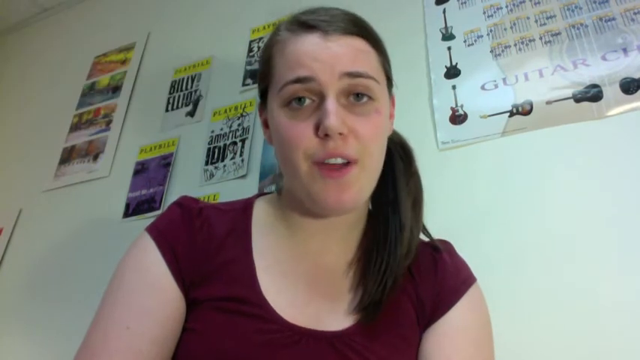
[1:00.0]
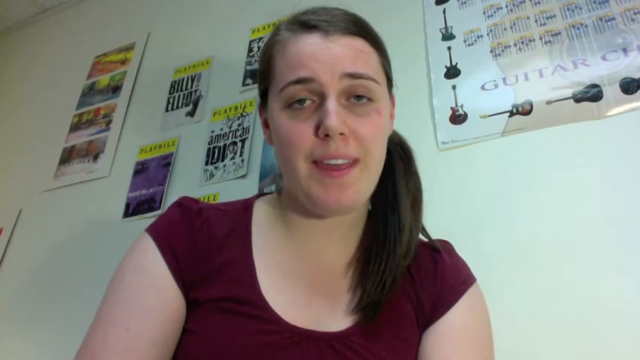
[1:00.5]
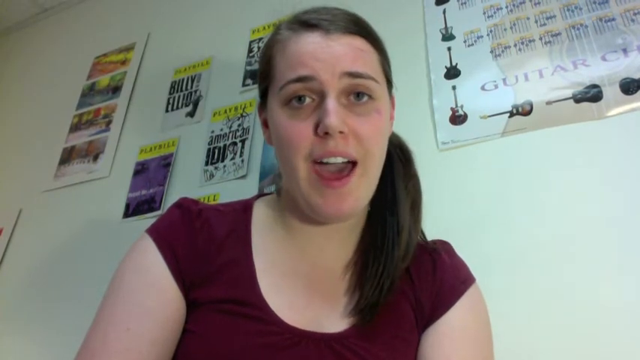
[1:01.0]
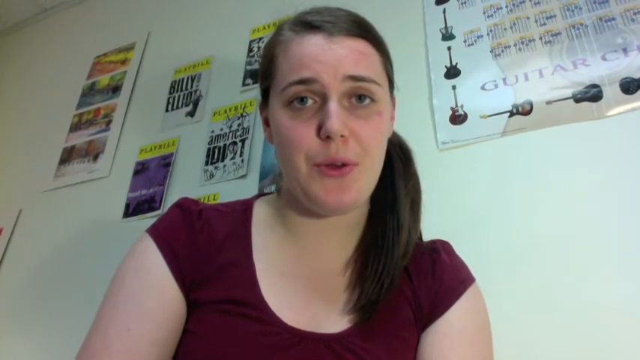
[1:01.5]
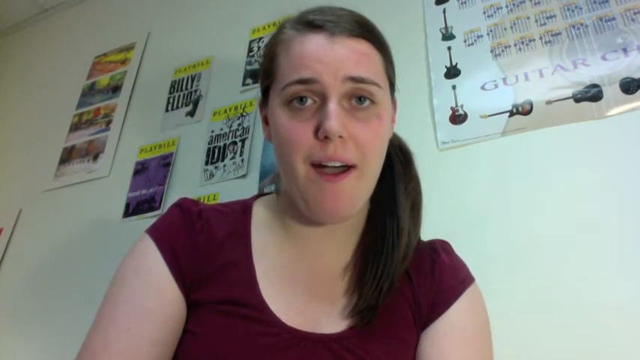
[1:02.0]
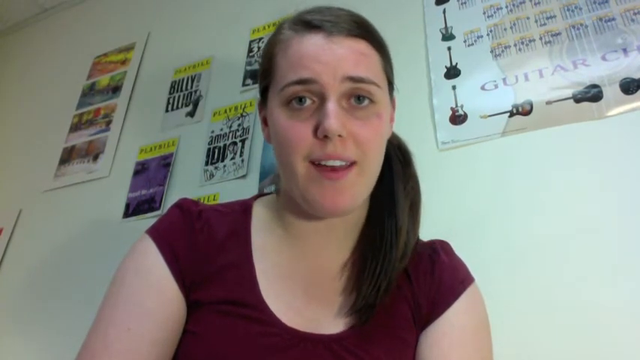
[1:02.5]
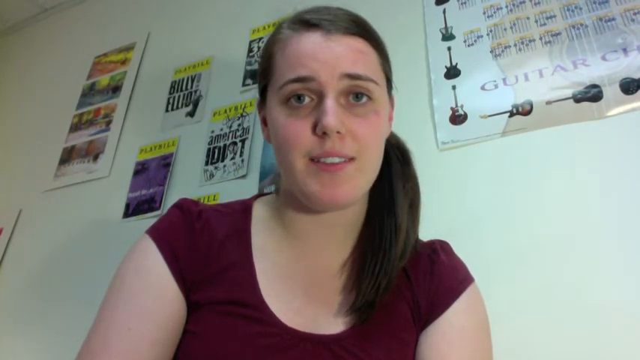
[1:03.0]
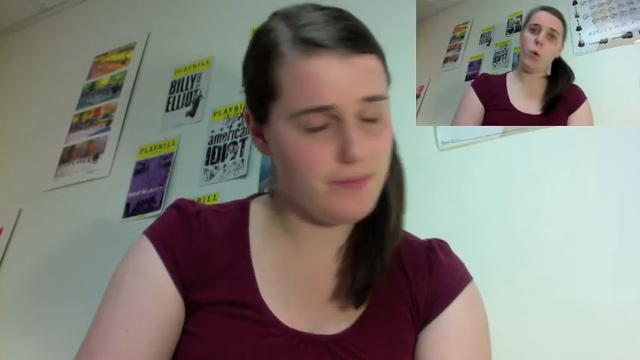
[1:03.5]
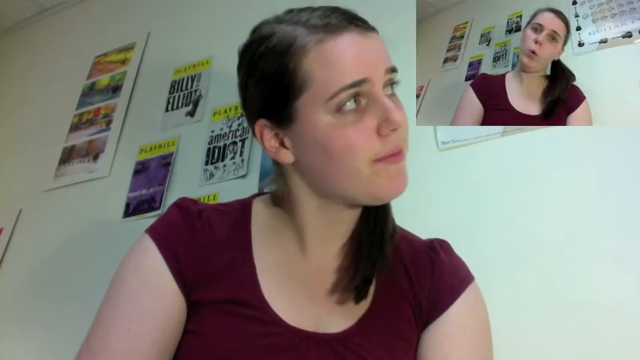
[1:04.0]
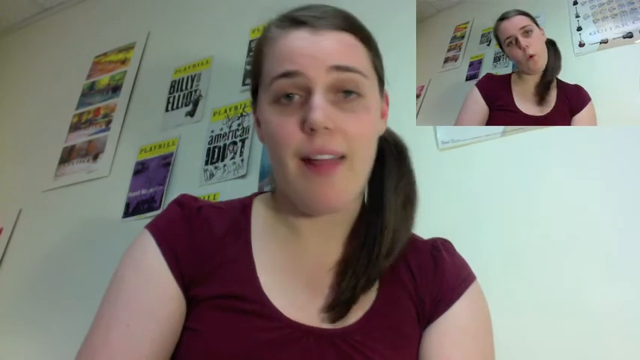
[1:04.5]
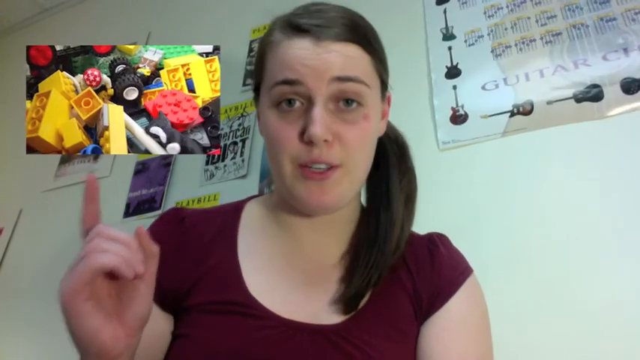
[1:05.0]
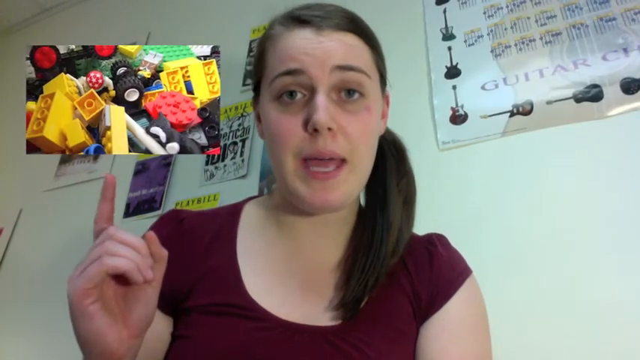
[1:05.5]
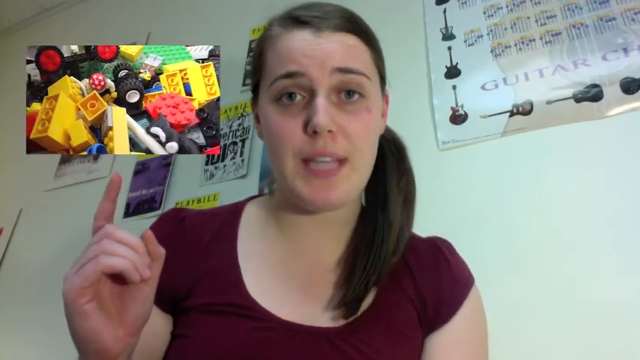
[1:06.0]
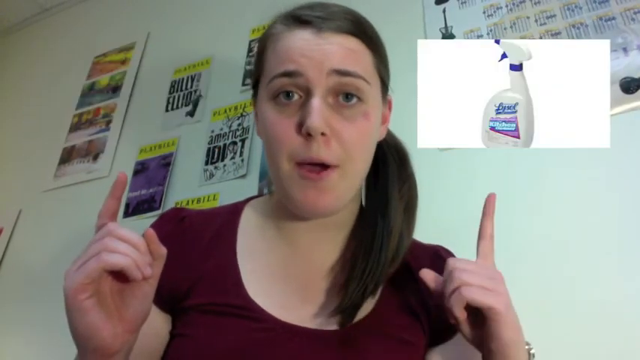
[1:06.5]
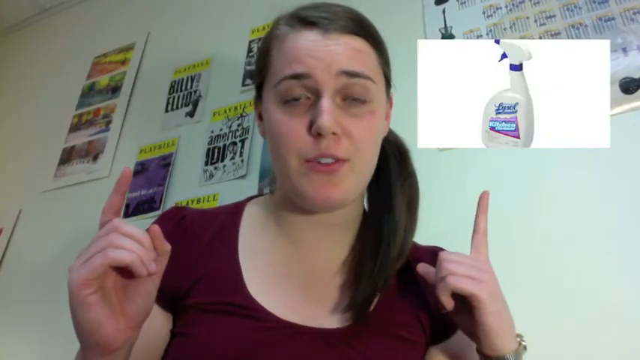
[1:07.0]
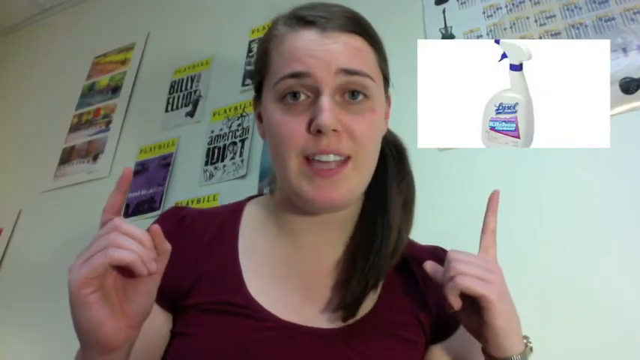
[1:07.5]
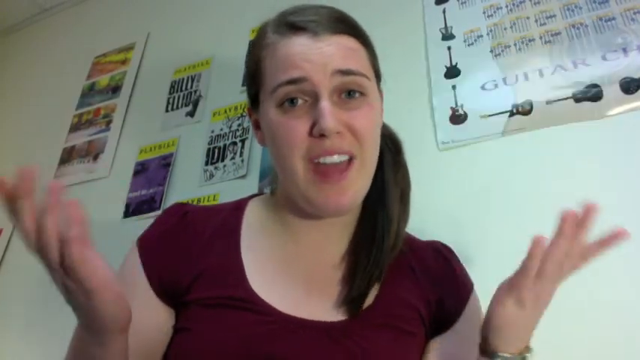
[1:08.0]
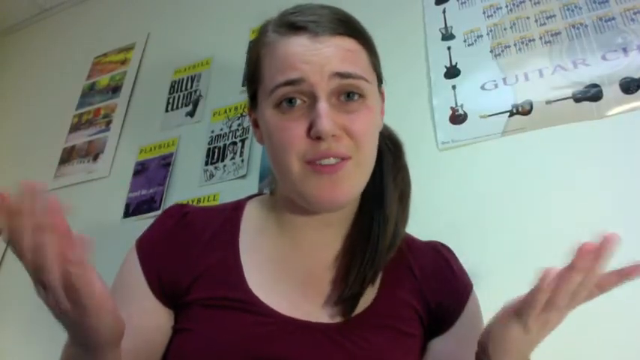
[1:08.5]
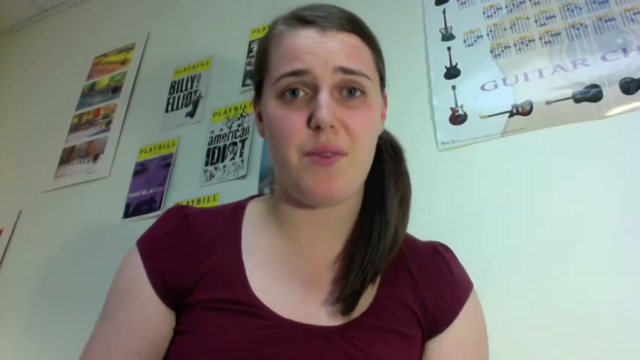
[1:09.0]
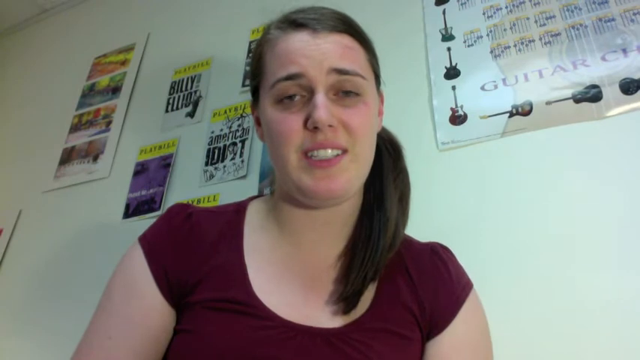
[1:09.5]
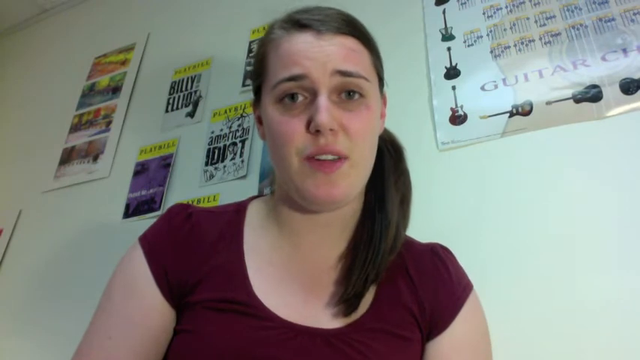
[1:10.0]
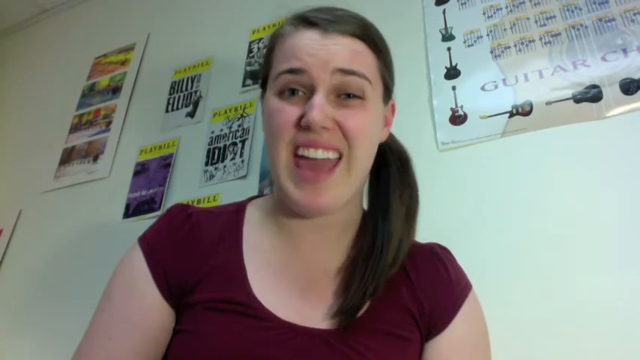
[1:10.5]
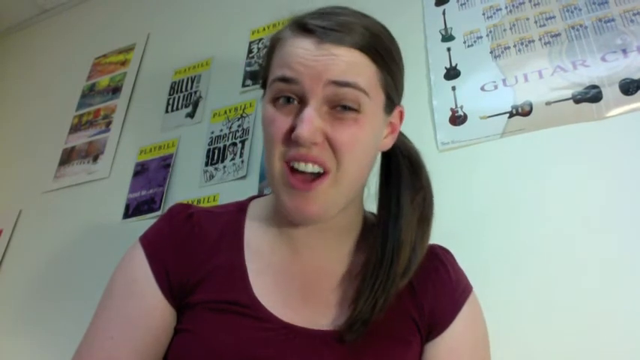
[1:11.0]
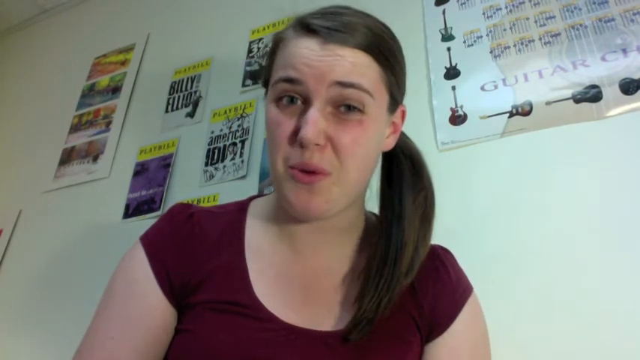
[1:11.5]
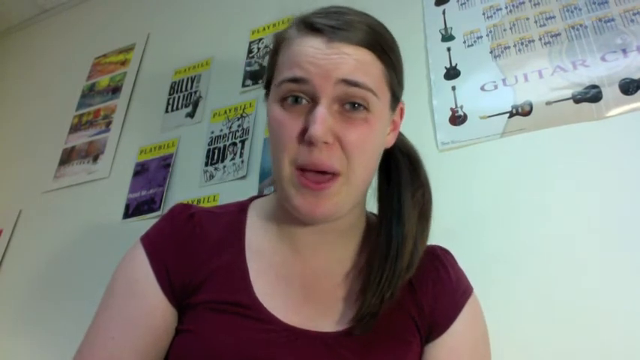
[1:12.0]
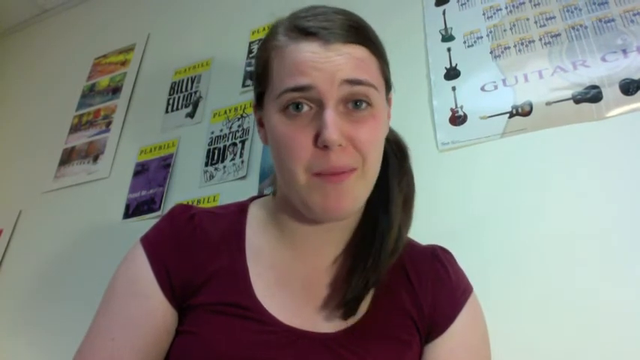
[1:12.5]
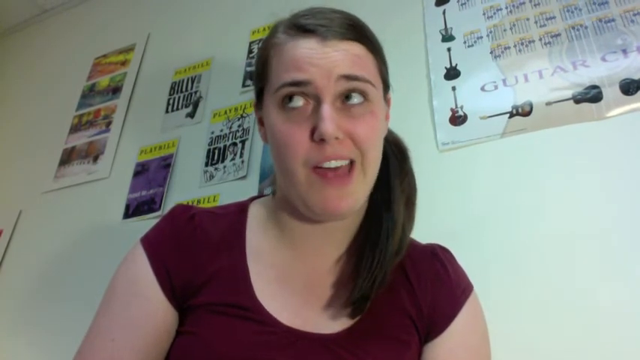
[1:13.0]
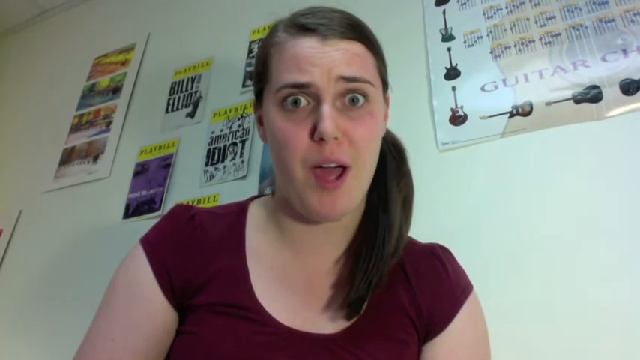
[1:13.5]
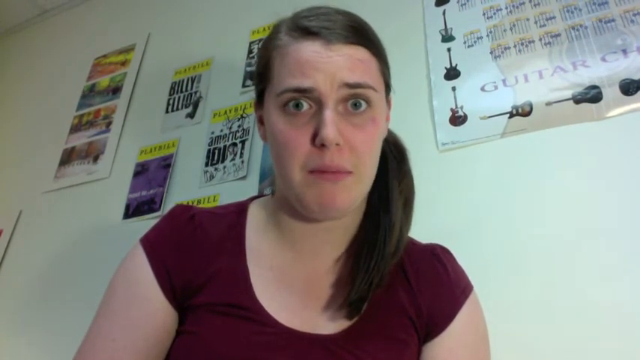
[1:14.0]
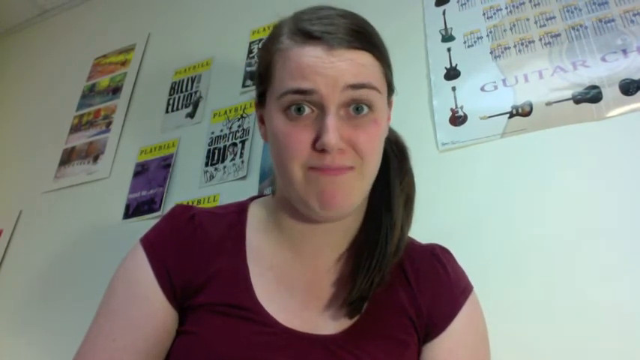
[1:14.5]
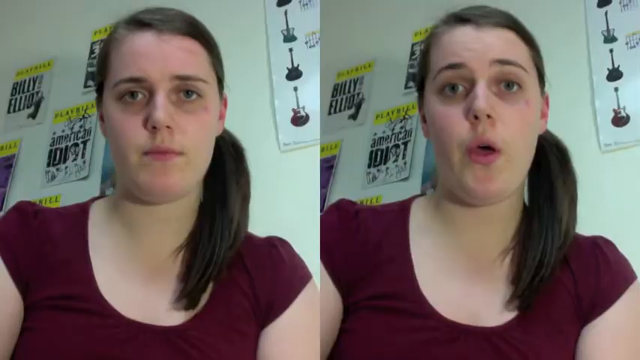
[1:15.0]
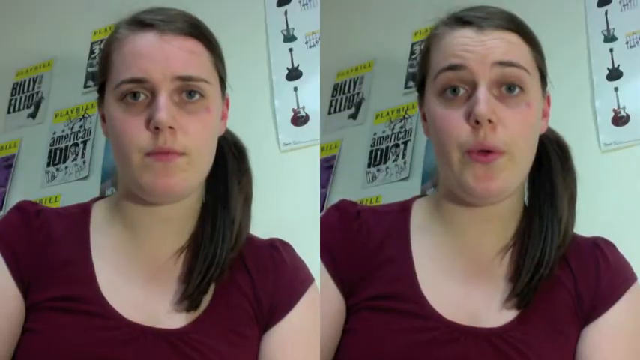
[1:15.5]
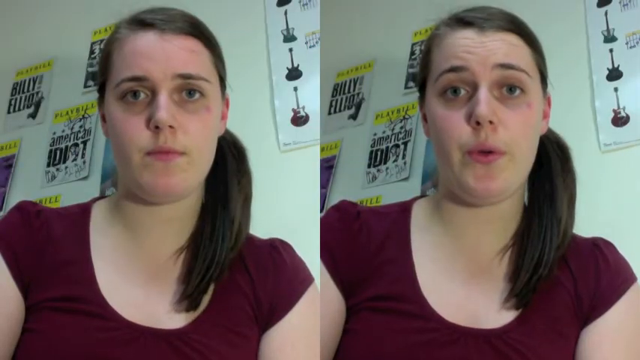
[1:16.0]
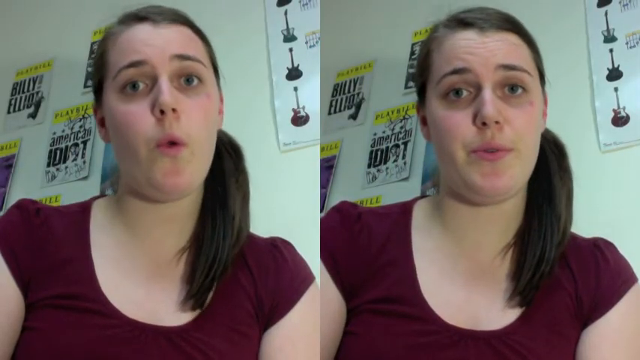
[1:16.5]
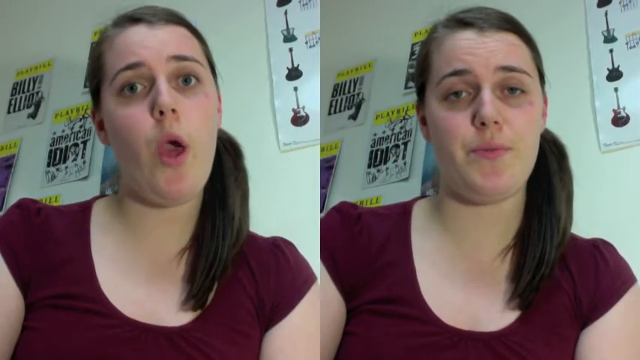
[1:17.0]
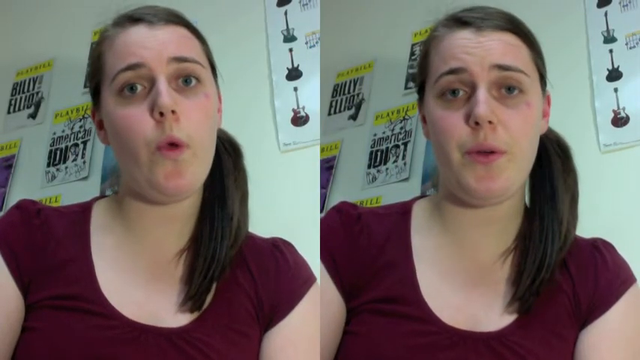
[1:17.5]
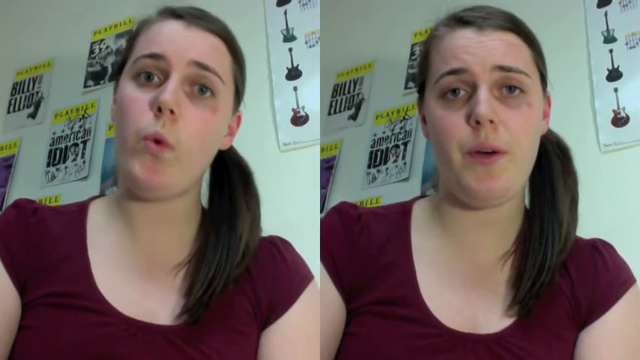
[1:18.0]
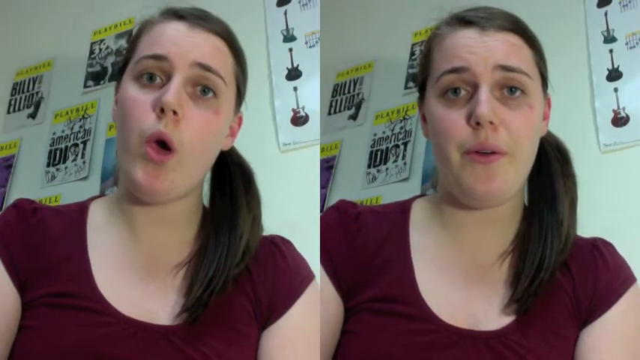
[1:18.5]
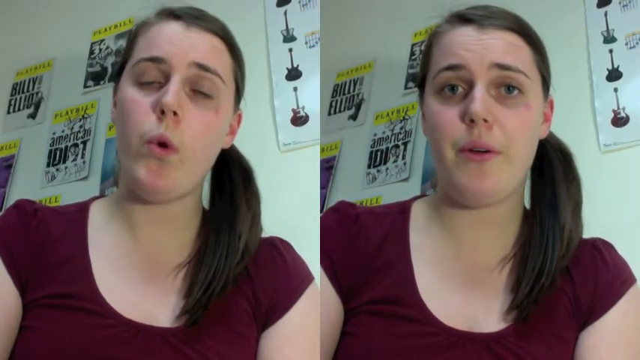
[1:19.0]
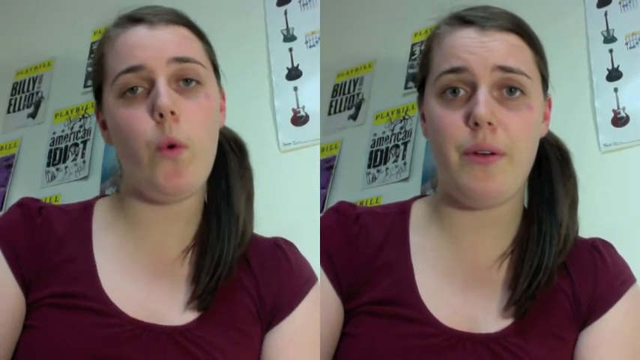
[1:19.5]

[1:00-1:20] The girl, with brown hair, brown eyes, a maroon shirt and a side ponytail, talks and moves her head, looking up to the right at another video of herself making a funny face. She points at Lysol and what look like yellow Legos, along with what looks like a die and other toys such as tires. The Lysol bottle is white with blue on it and has a blue spinner lid. She is either singing or whistling, and a split screen shows two of her. She is very energetic, moves a lot, sometimes moves her mouth a lot when talking, and makes weird gestures, eye rolls and a disgusted face. The posters are still on the wall, though fewer than before; some say different things. There appear to be seven guitars on one, labeled "guitar", and in split screen only four guitars show on each side.